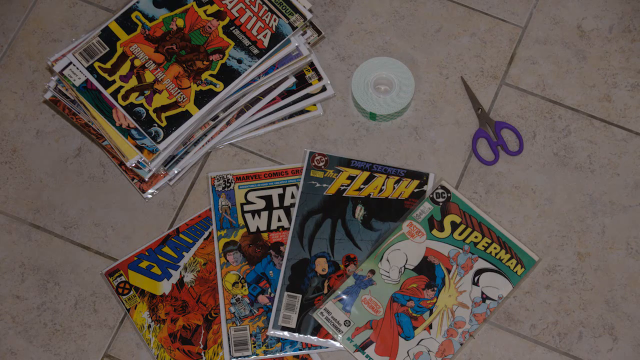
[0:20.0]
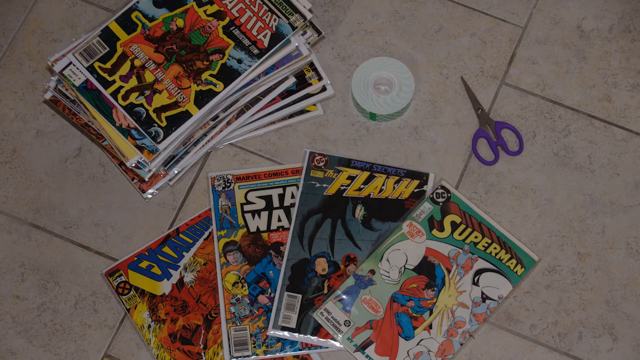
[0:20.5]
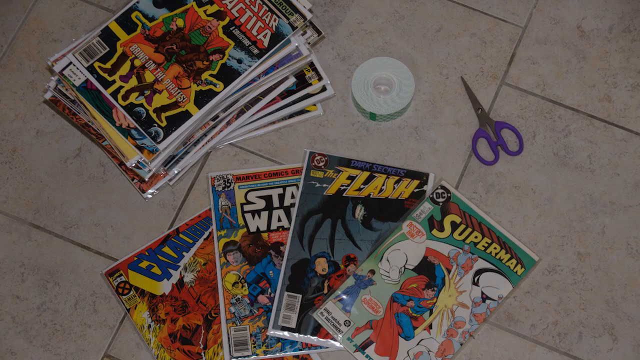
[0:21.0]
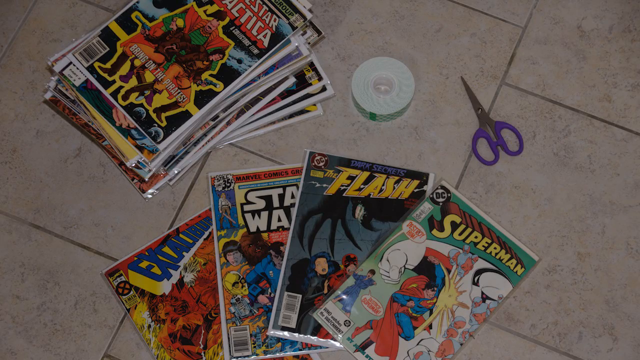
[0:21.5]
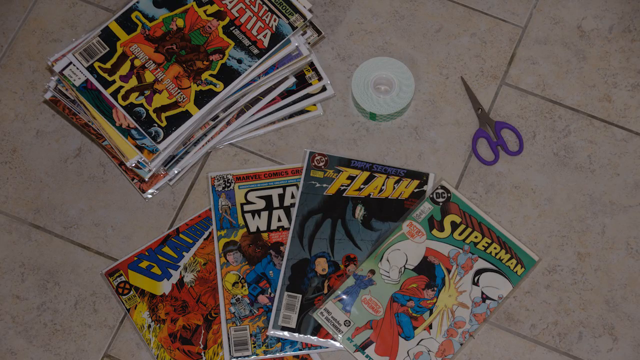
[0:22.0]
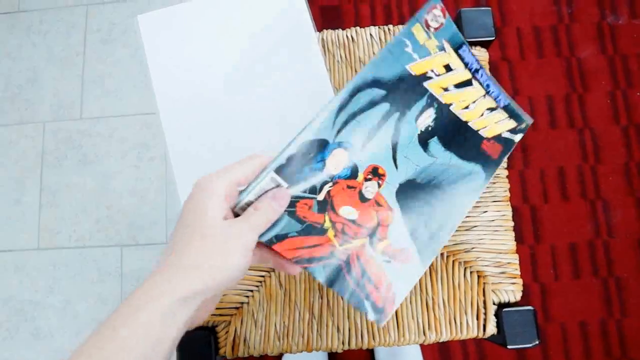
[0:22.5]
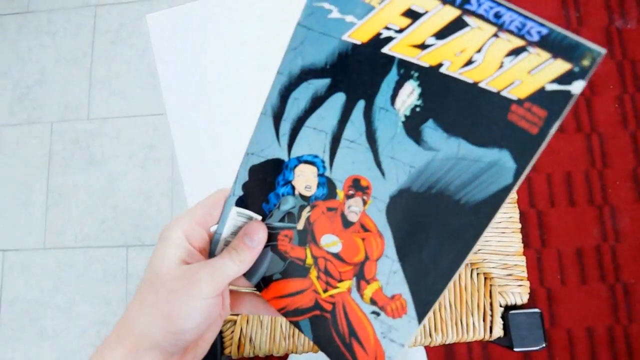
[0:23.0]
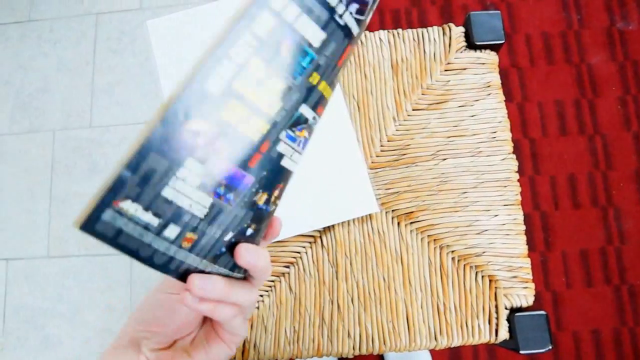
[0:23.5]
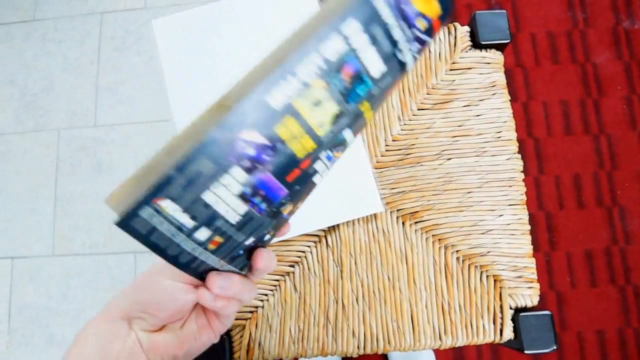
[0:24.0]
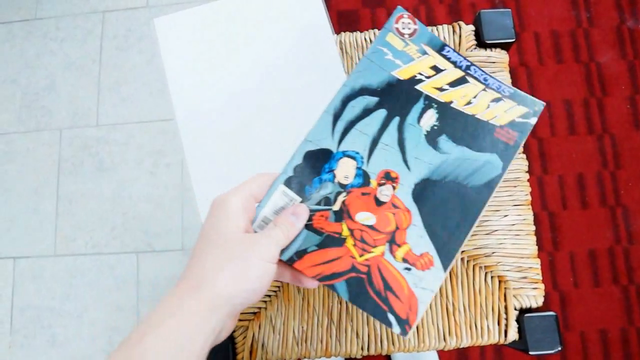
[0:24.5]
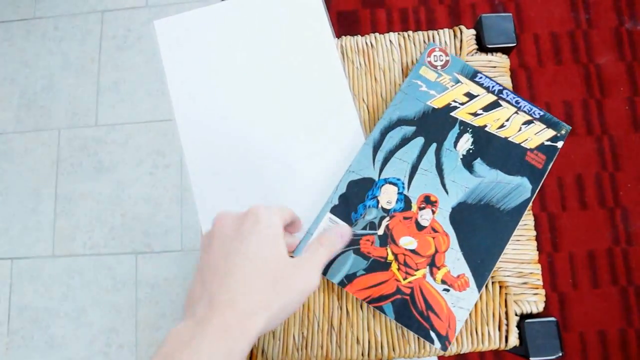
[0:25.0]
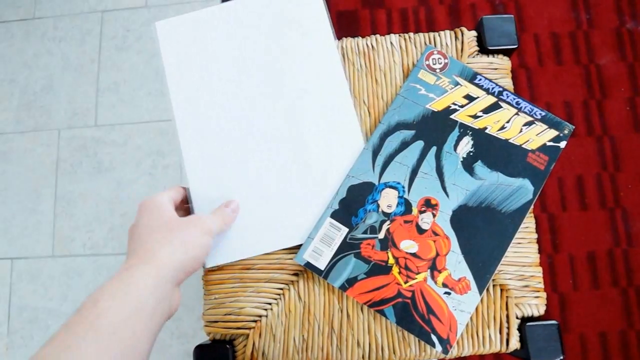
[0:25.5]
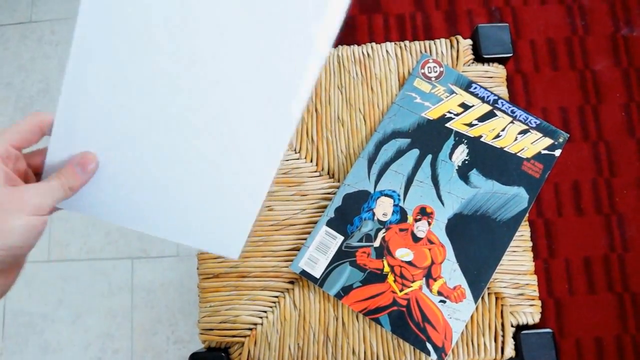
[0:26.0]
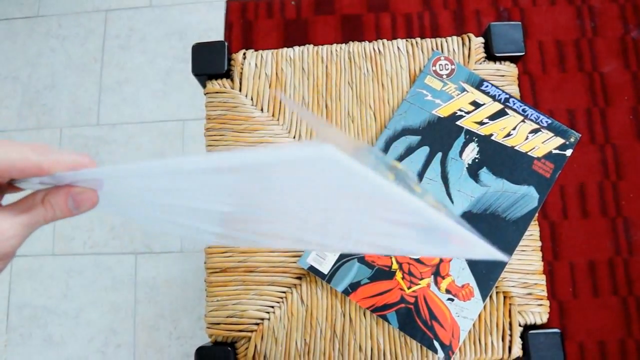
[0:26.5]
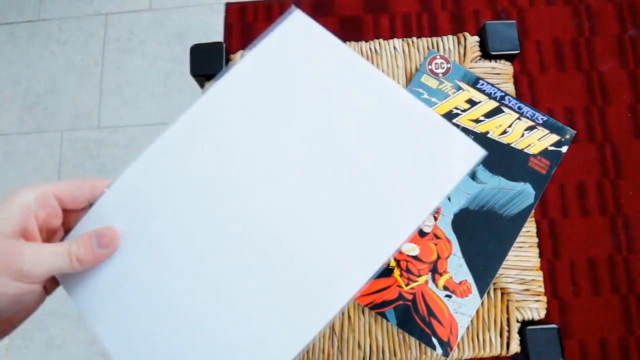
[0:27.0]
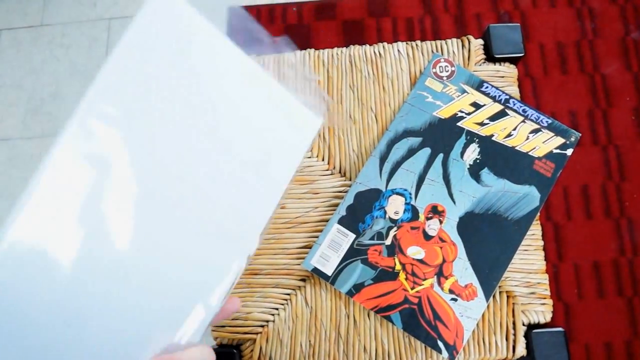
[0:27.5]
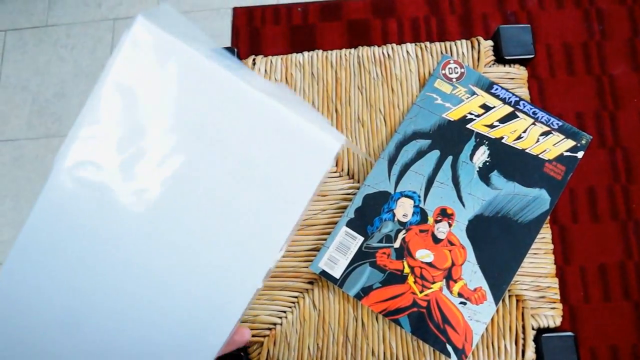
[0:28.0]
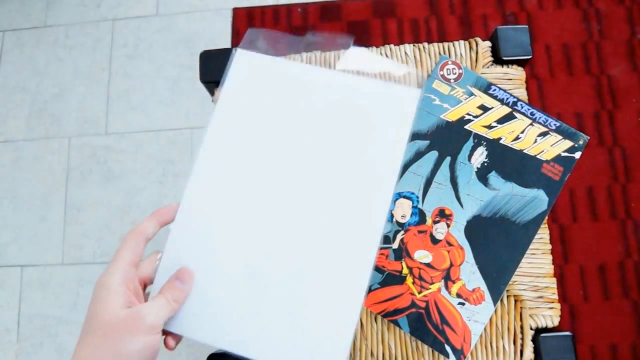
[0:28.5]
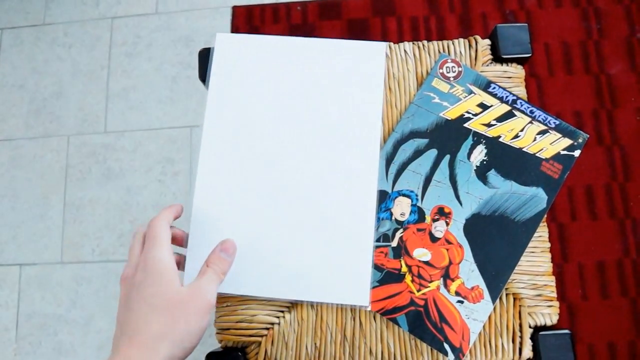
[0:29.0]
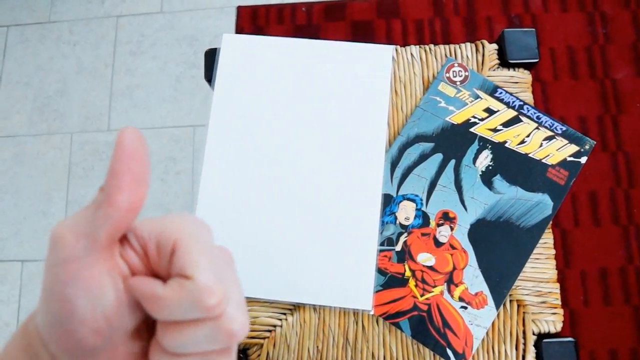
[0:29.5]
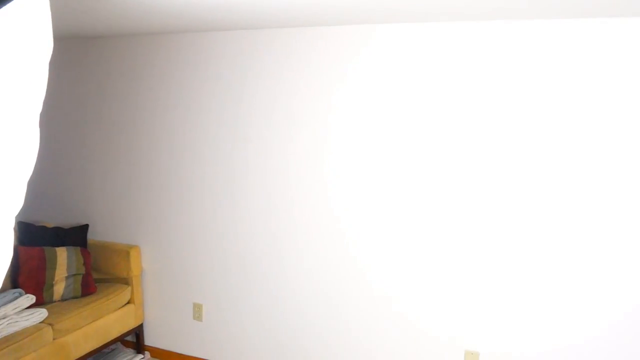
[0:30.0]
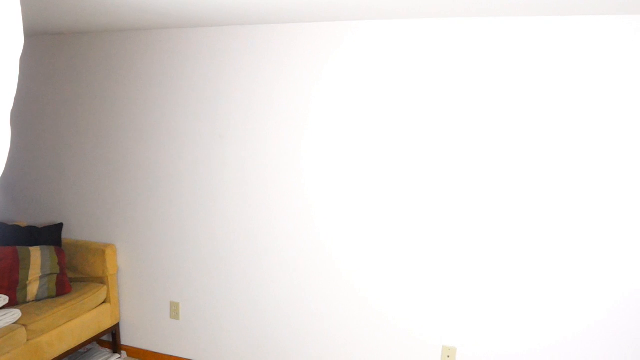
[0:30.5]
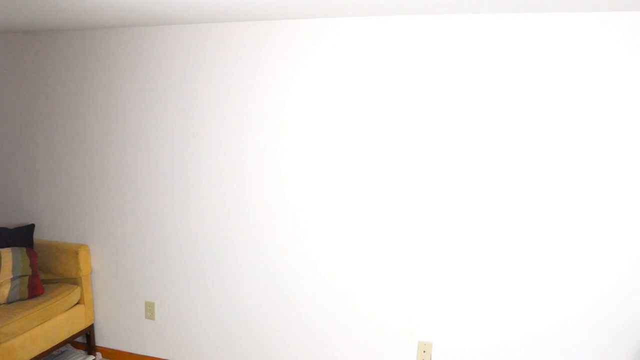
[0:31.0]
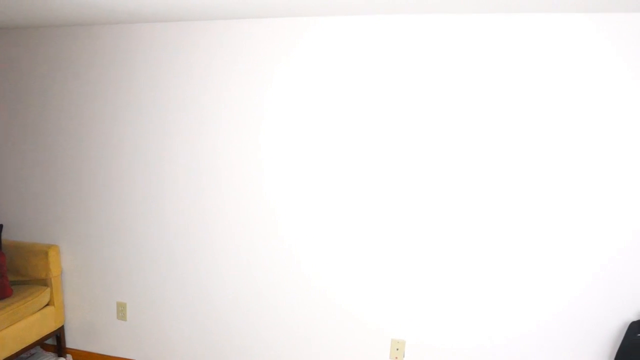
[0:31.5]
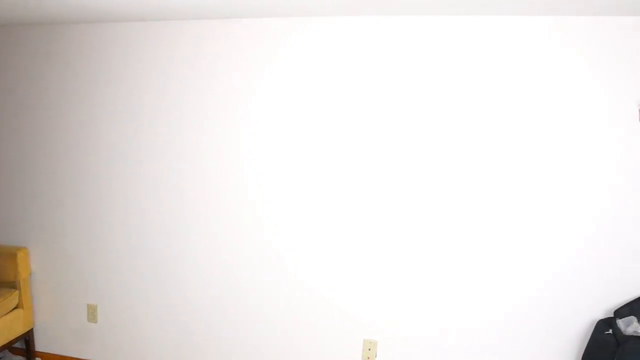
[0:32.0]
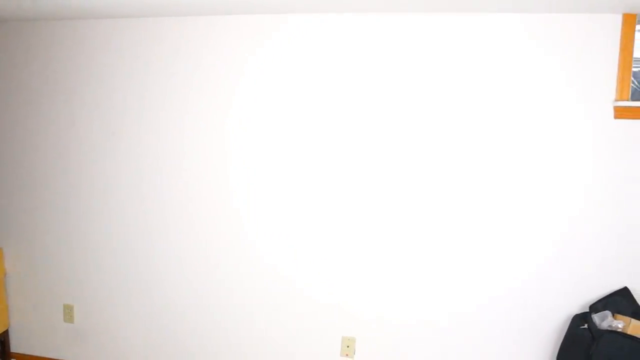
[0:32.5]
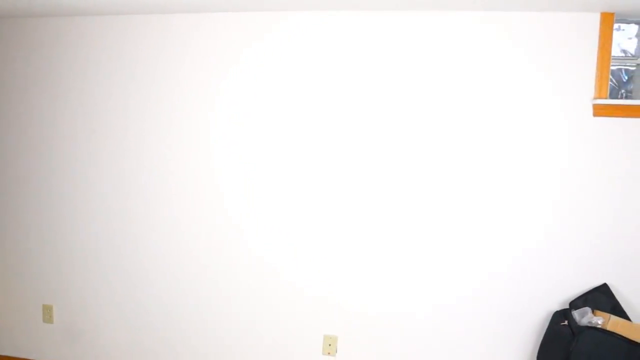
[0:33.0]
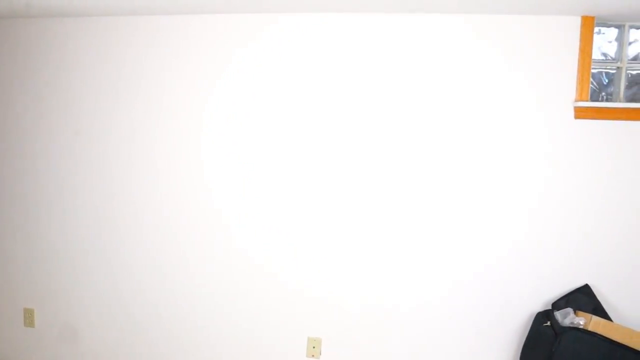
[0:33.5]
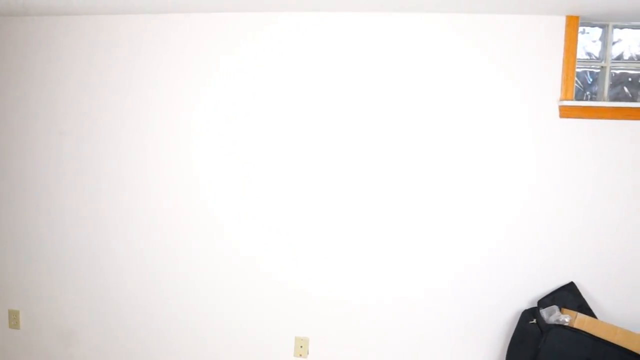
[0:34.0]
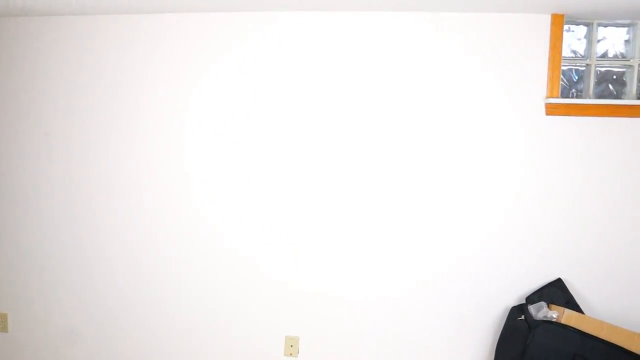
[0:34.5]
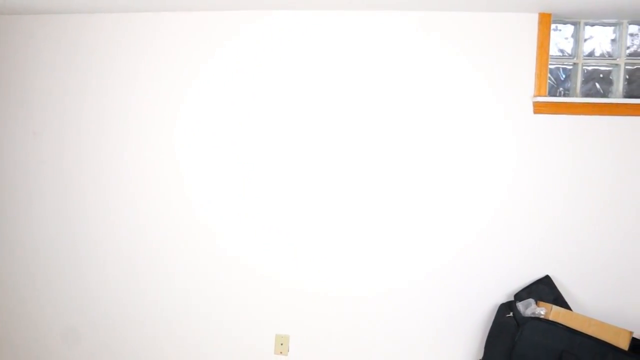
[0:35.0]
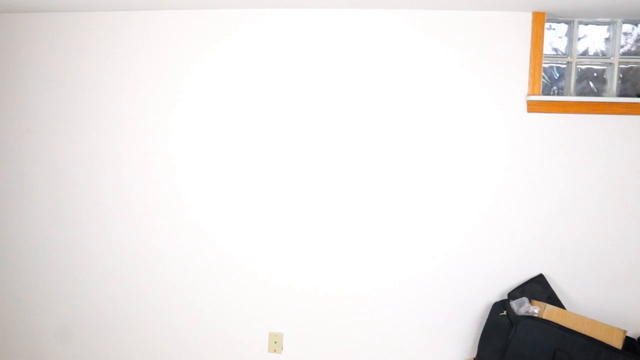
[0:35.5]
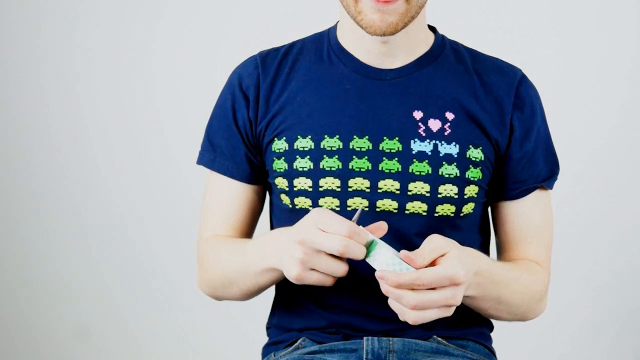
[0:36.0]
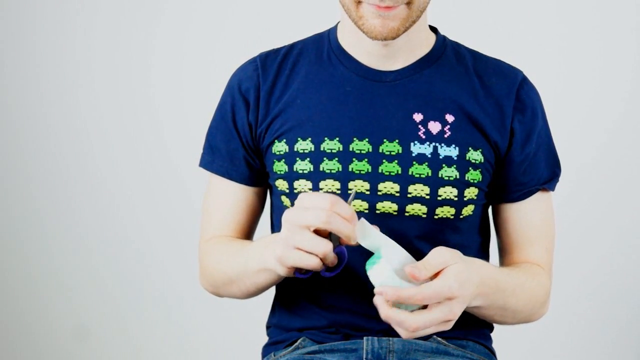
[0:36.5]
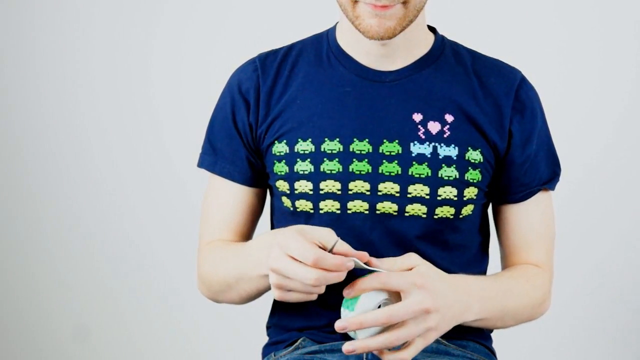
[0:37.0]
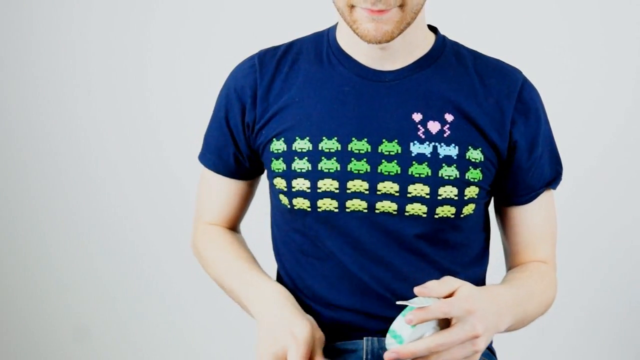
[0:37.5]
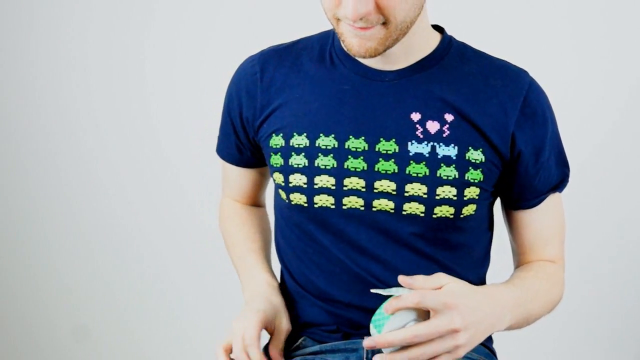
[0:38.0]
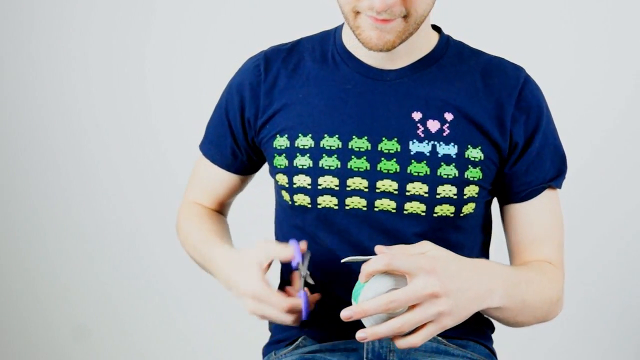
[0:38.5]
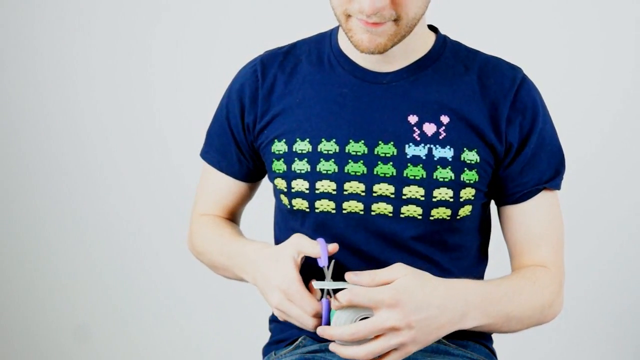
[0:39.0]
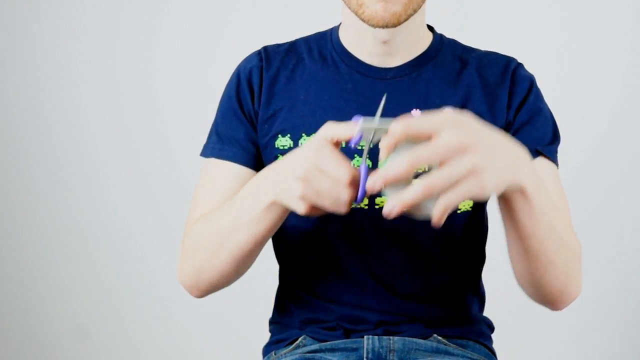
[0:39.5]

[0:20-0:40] An image shows comic books on what looks like square tile flooring: a pair of blue scissors, a stack of comics at the top of the screen, and four comics side by side below. In the next scene, a hand grabs a comic book, The Flash, and shows its front and back. The person then picks up a white piece of paper, flips it to show both sides, and gives a thumbs up. The next scene starts on a bedroom wall with a lot of white light reflecting off it. The camera moves to the right and a brief holographic image of a person appears. The camera then shows the earlier person in the dark blue shirt, with his torso and the bottom half of his face visible; he appears to be cutting off a piece of tape.